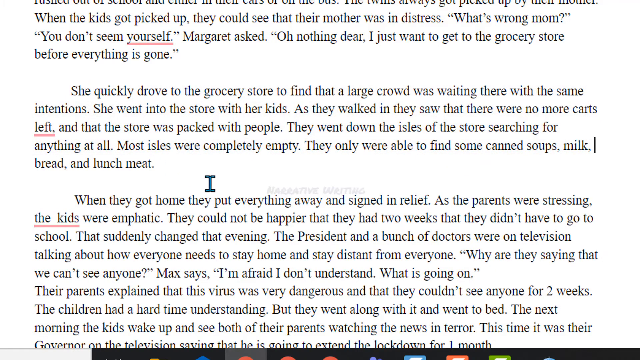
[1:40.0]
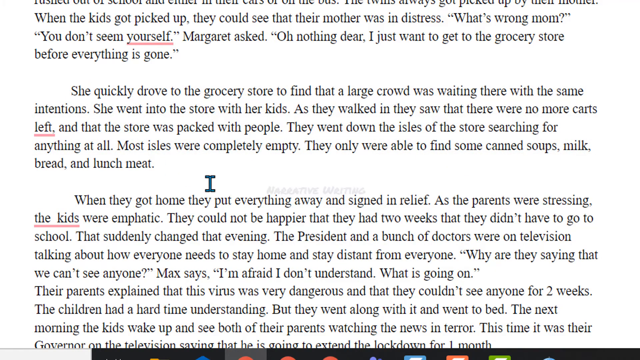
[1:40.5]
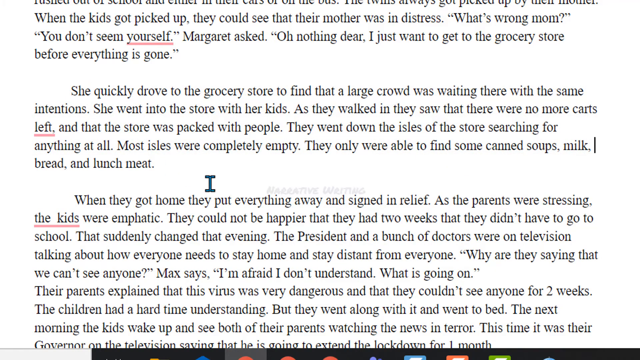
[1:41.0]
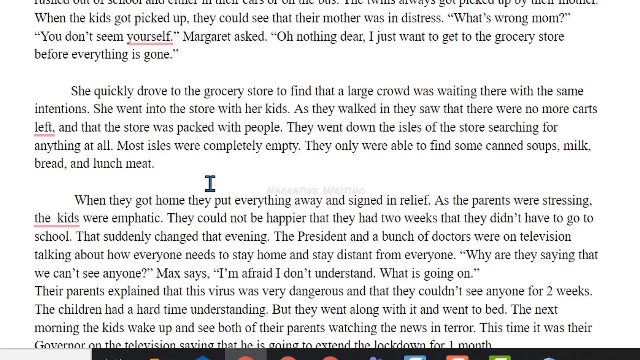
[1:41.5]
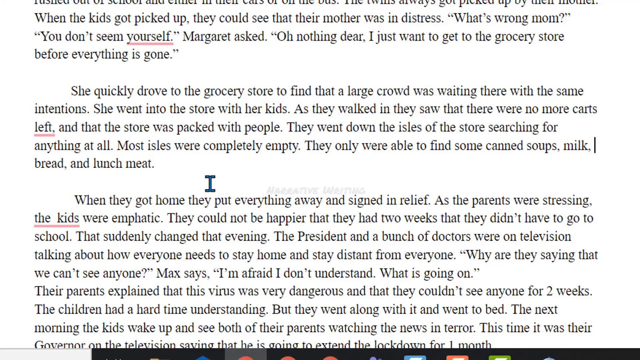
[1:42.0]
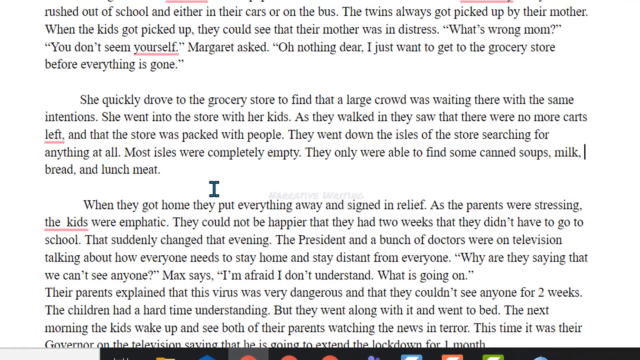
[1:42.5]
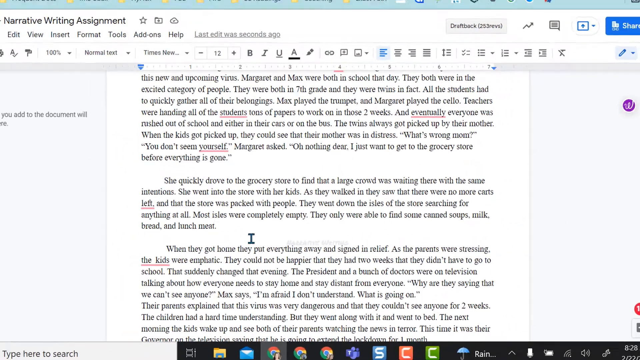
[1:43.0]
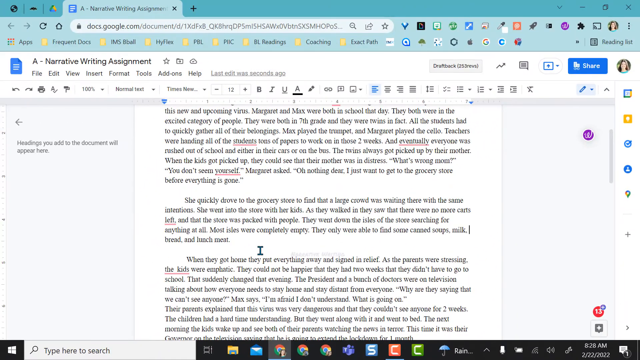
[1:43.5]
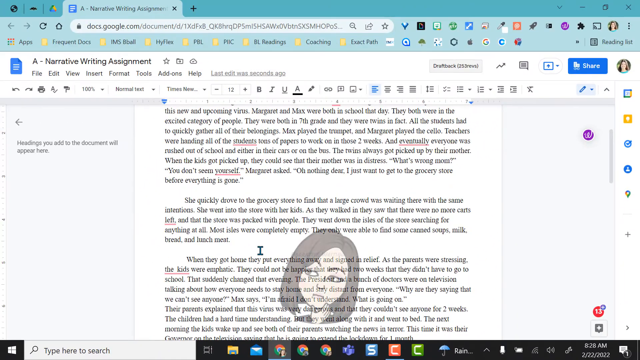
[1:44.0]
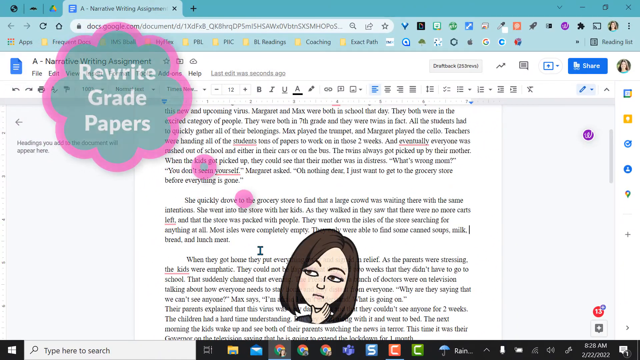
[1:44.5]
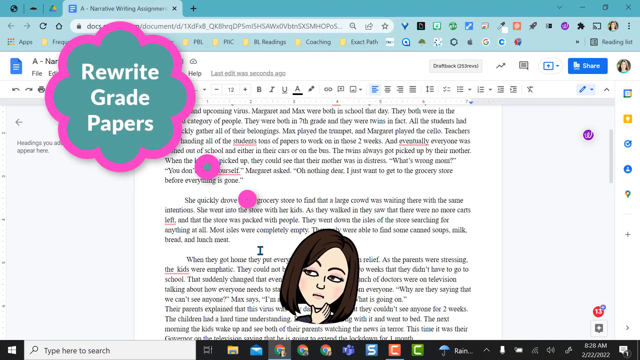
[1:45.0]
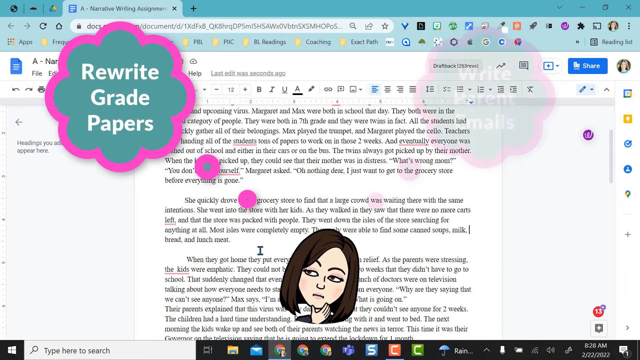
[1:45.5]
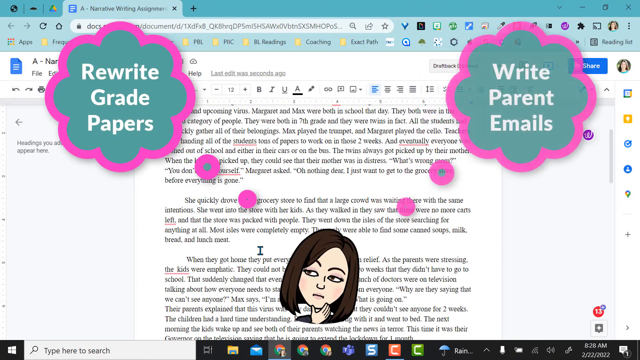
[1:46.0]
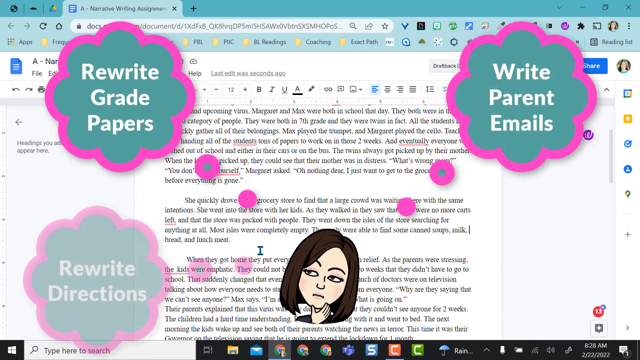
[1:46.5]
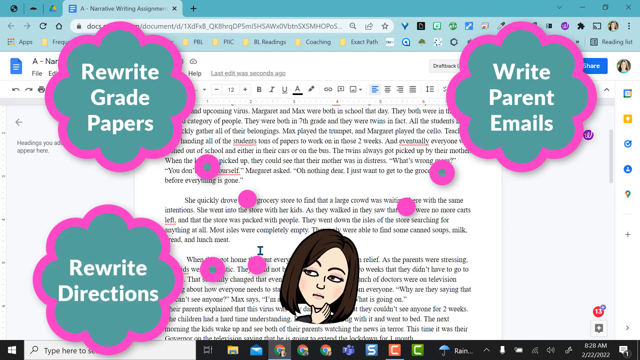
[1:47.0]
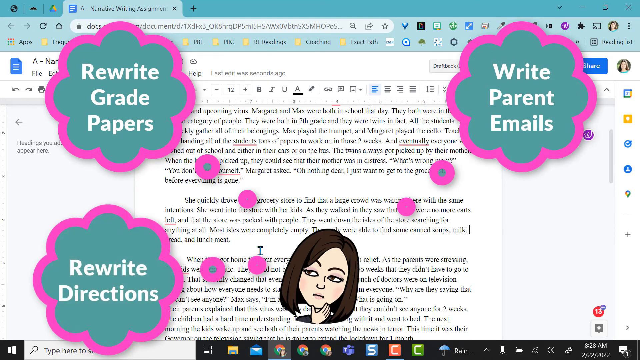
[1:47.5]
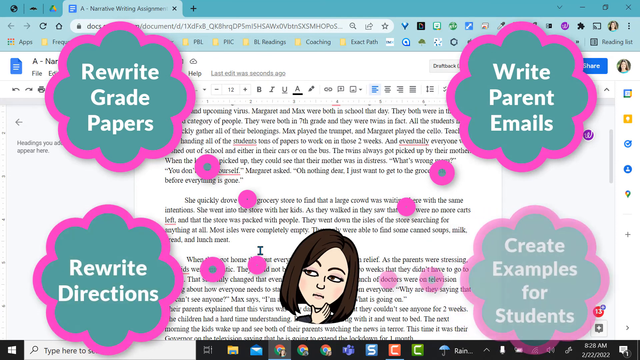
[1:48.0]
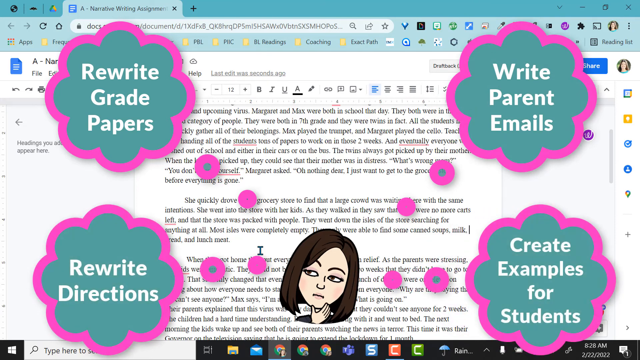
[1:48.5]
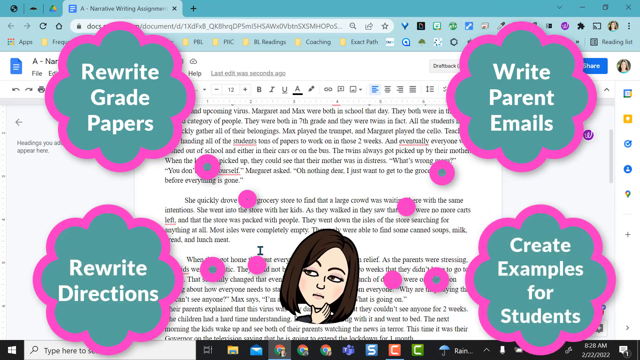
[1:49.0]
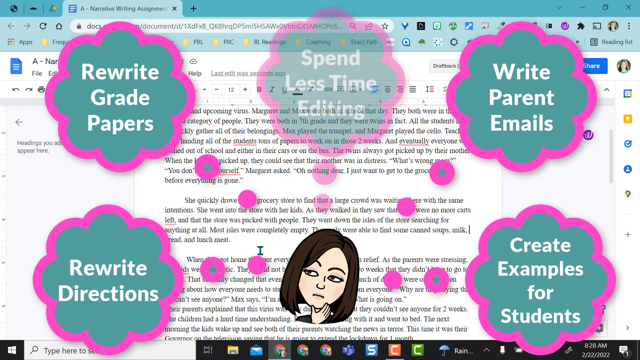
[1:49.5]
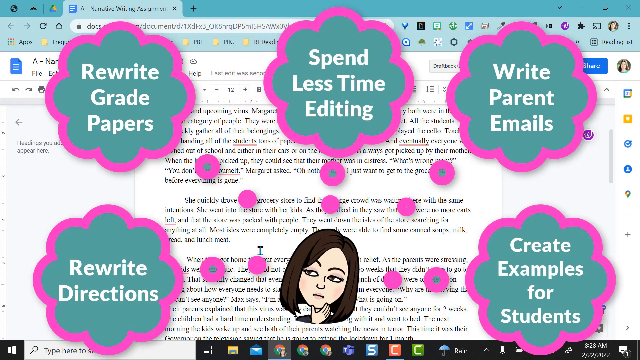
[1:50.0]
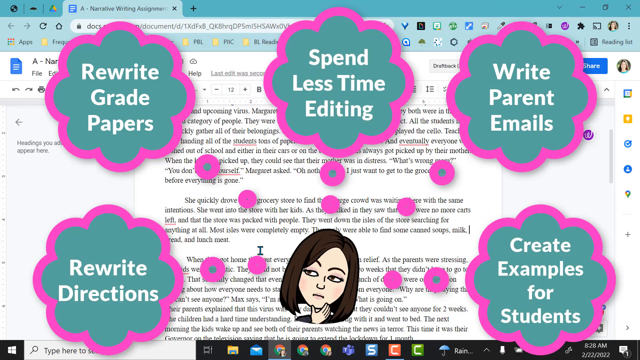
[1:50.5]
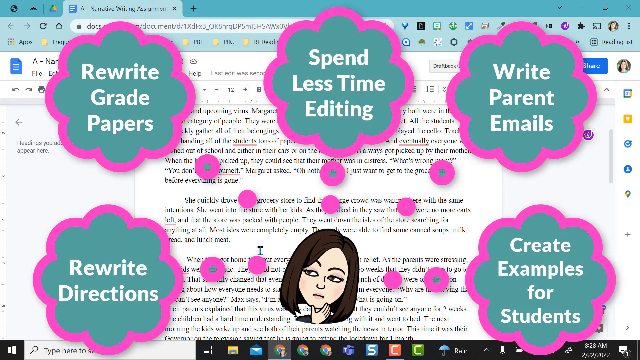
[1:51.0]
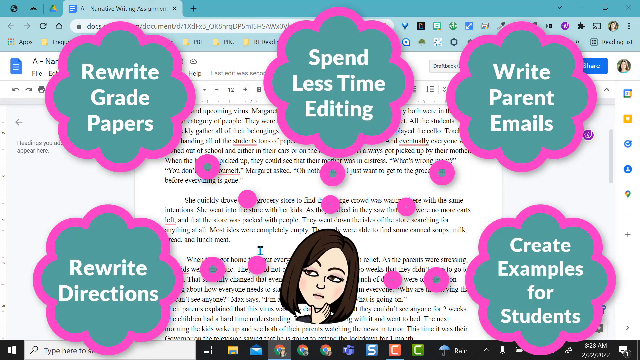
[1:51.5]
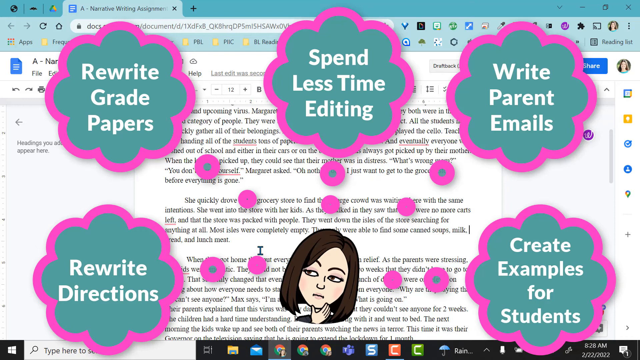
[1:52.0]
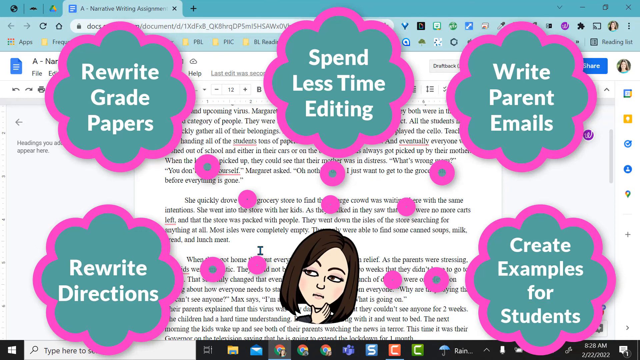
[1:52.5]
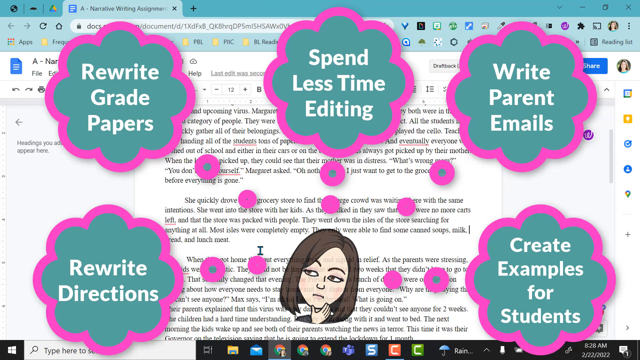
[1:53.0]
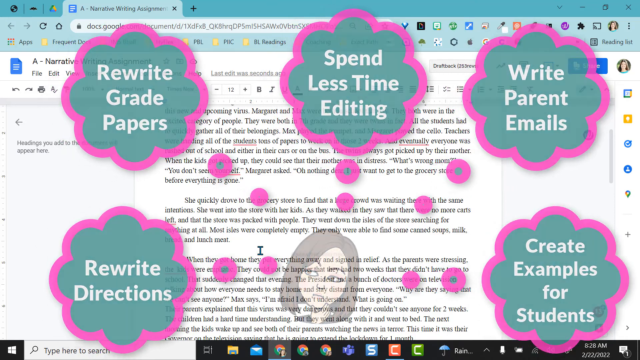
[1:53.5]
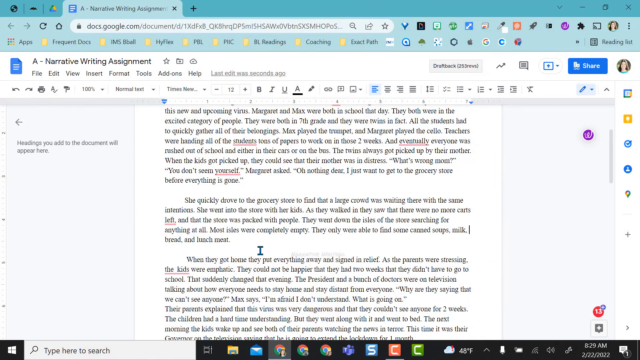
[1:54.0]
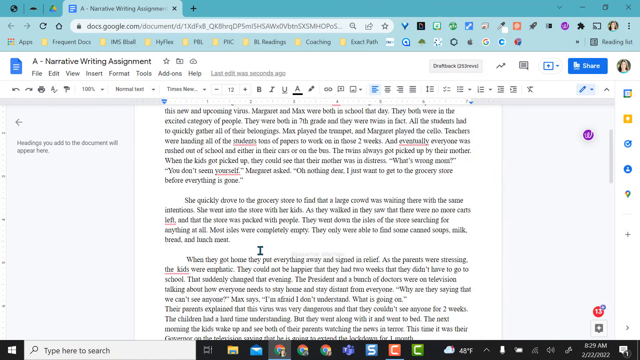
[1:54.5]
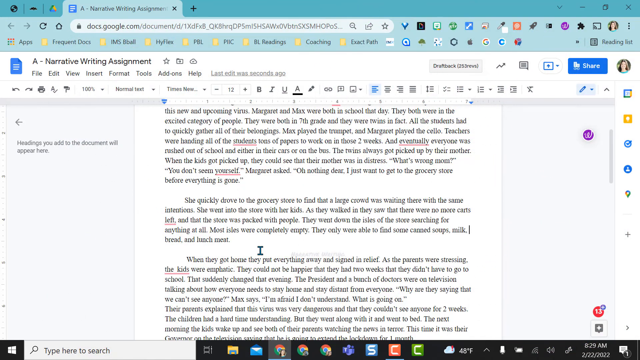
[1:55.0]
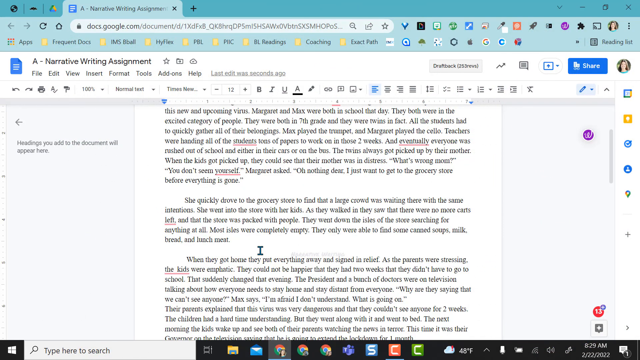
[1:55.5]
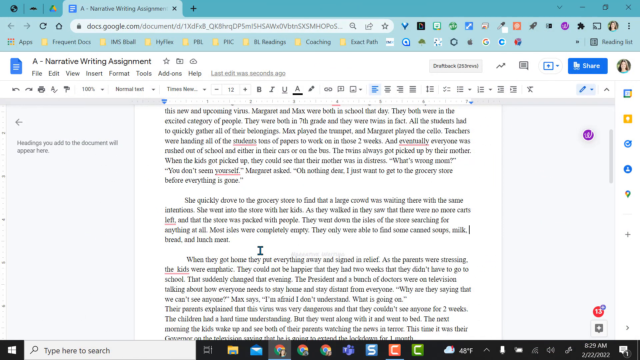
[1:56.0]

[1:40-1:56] A collection of paragraphs organized into a narrative writing assignment is shown, with three main paragraphs. The video then transitions to a visual logo or advertisement with a digital woman's head shown in a thinking pose, with thought bubbles saying "rewrite great papers," "write parent emails," and "rewrite directions." The thought bubbles have an aqua background with a pink border and large block white text in the middle. The document is shown in a Google Chrome browser with a blue border, a standard URL input box, and at least 10 extensions or shortcuts on the right side of the page.